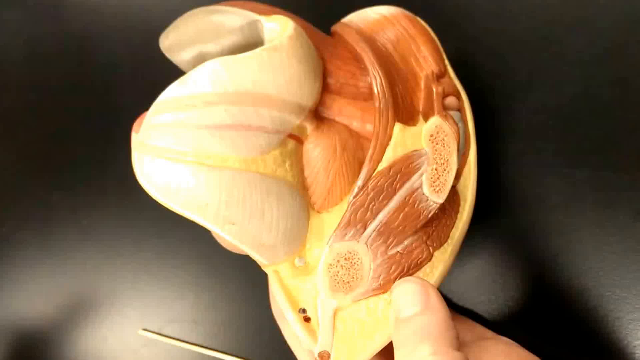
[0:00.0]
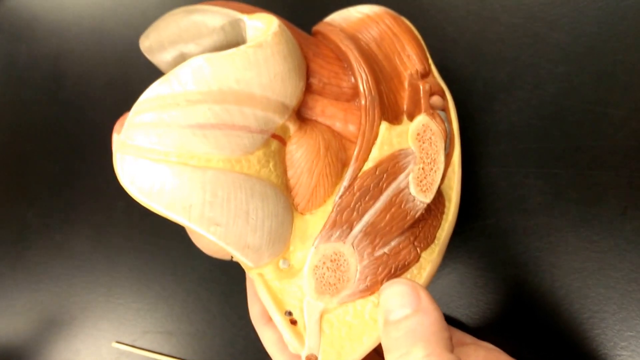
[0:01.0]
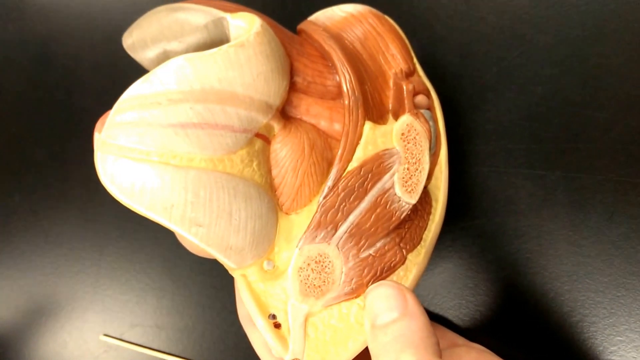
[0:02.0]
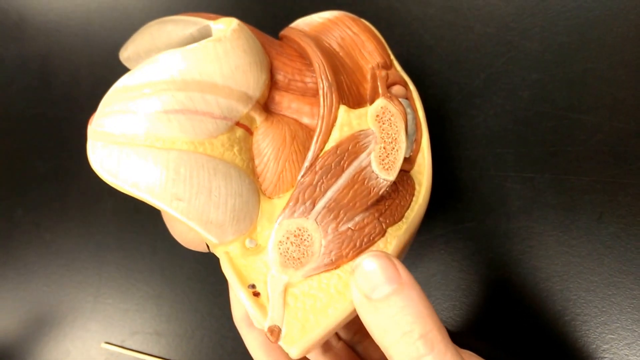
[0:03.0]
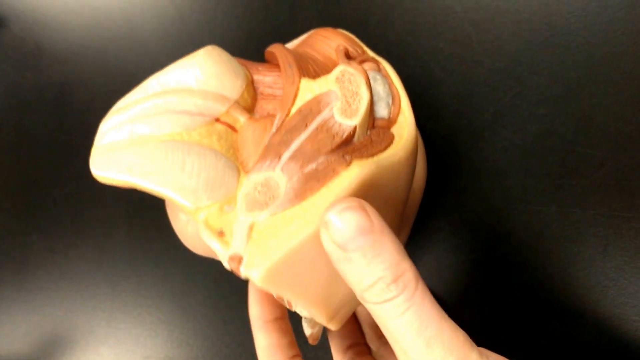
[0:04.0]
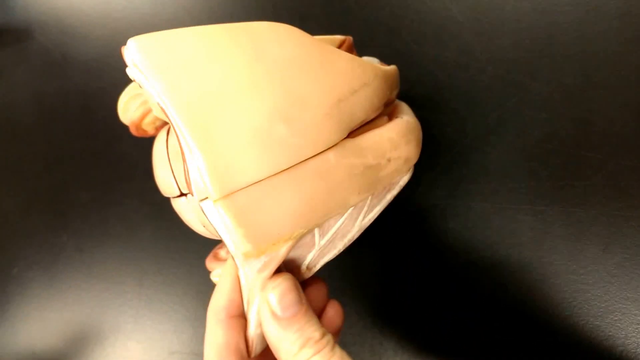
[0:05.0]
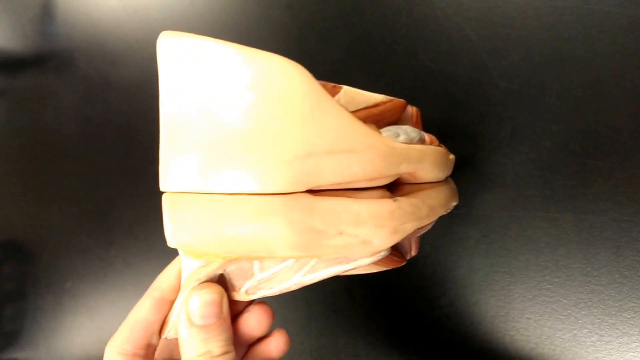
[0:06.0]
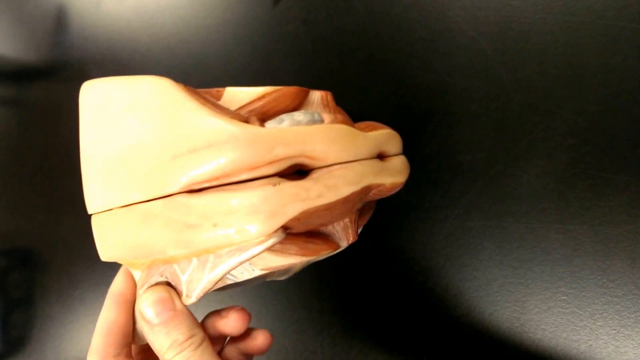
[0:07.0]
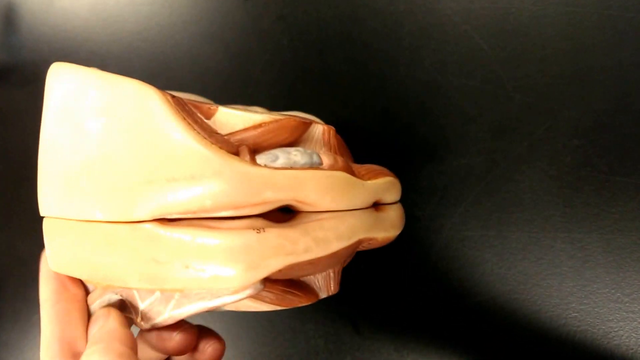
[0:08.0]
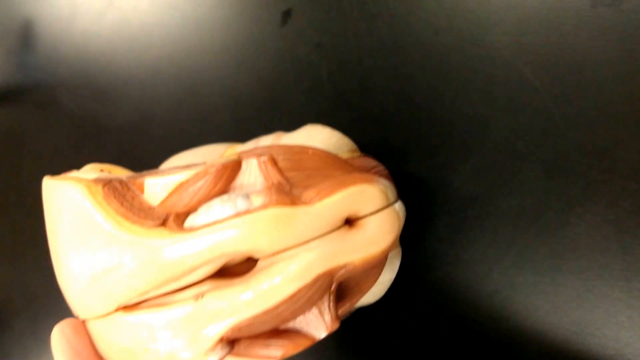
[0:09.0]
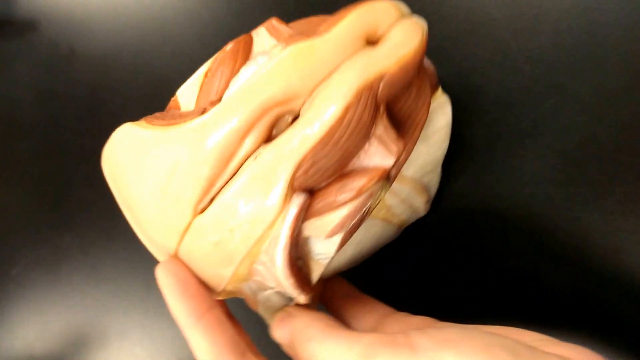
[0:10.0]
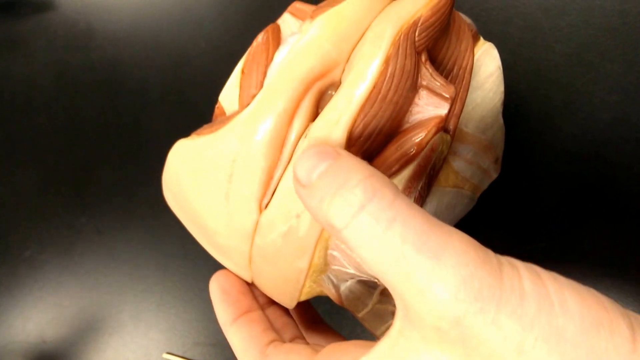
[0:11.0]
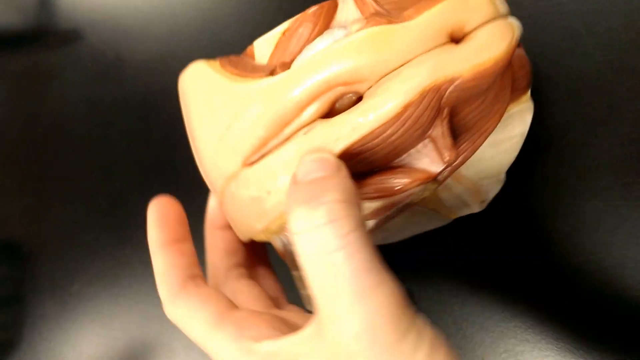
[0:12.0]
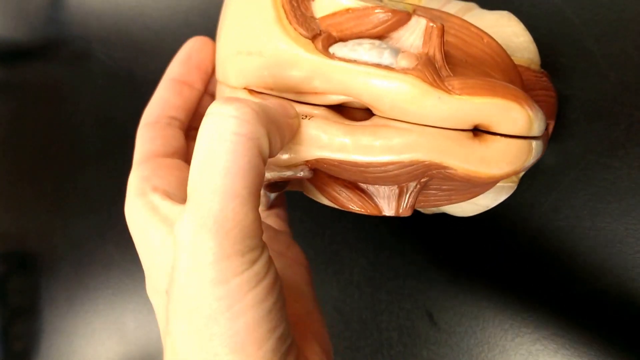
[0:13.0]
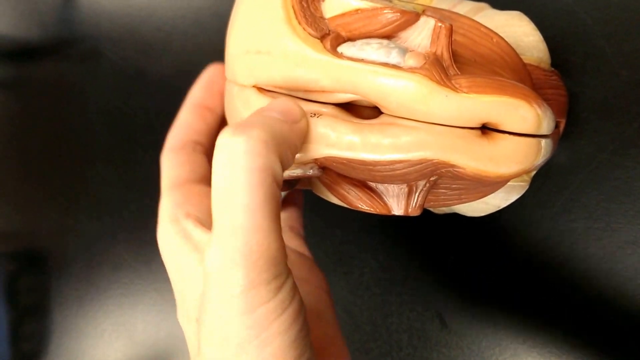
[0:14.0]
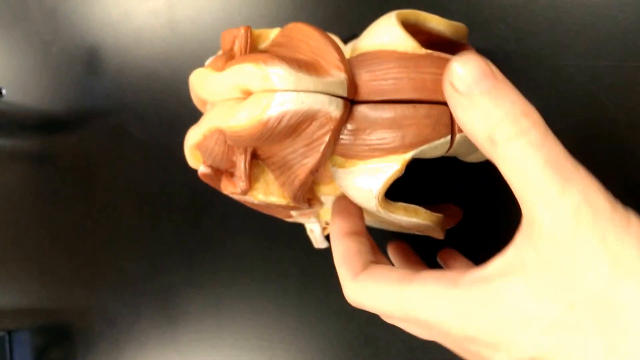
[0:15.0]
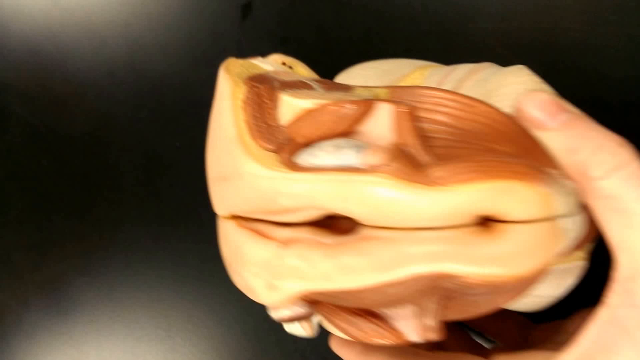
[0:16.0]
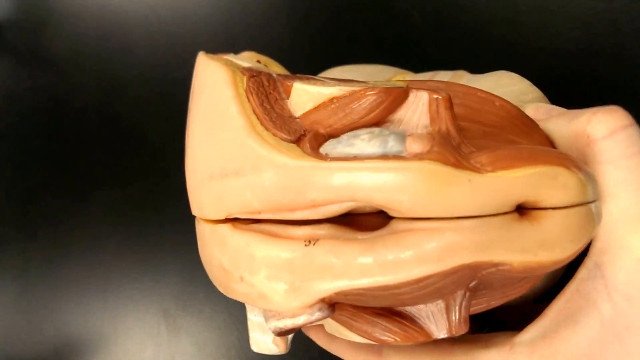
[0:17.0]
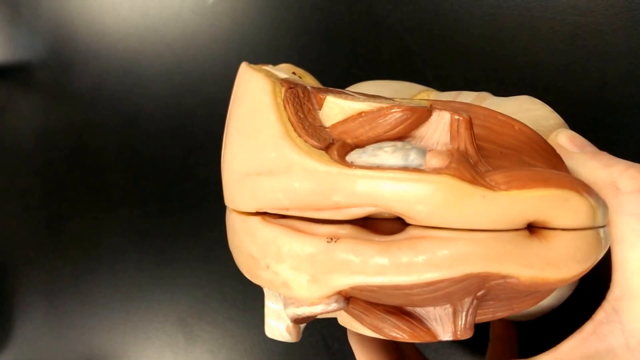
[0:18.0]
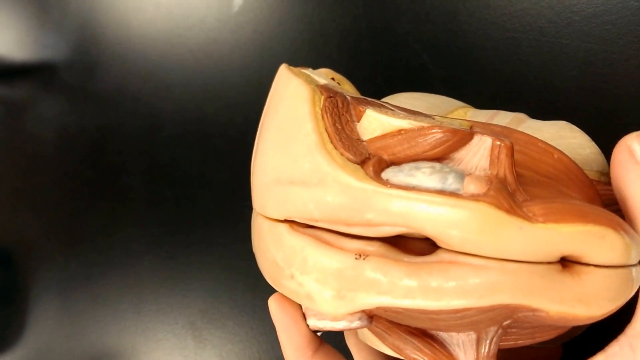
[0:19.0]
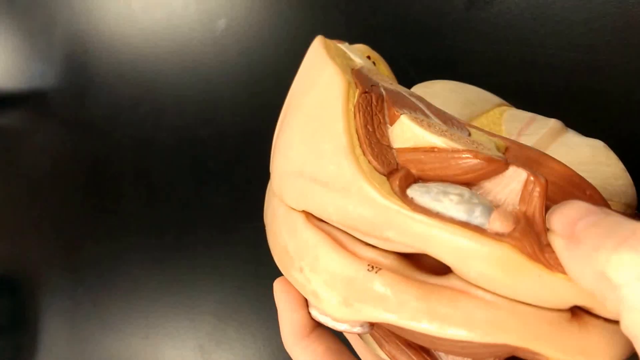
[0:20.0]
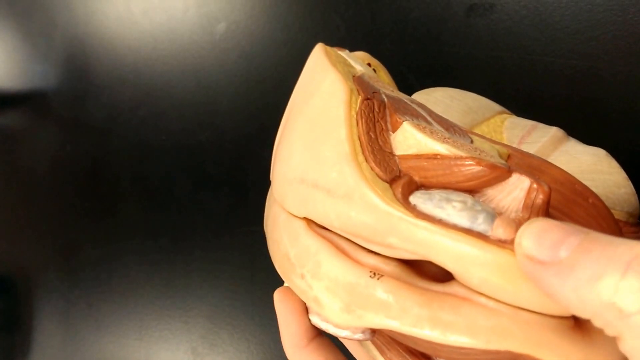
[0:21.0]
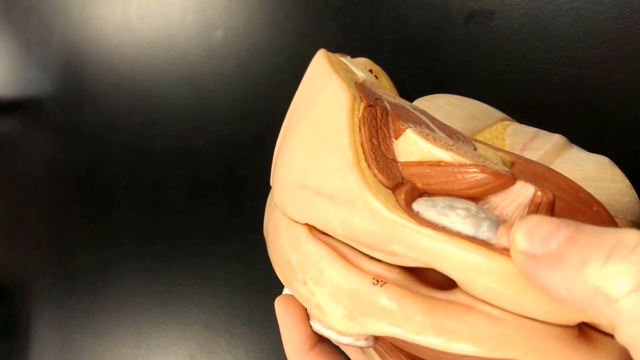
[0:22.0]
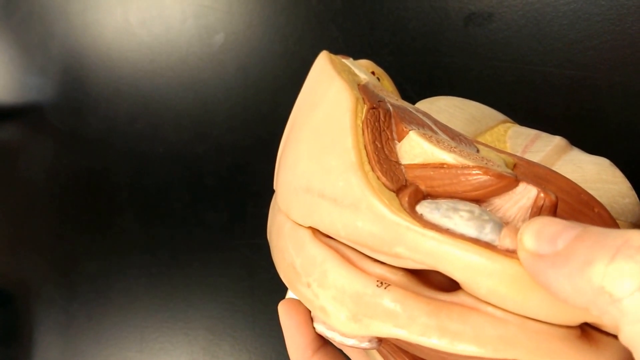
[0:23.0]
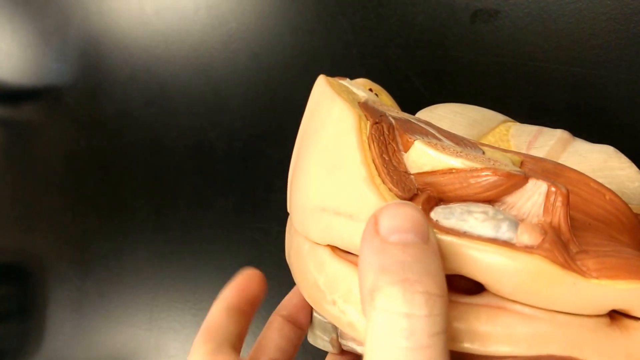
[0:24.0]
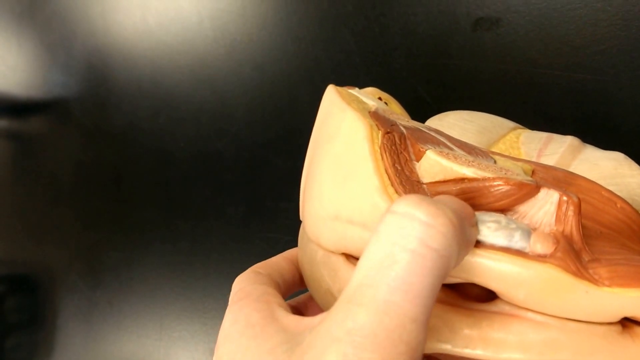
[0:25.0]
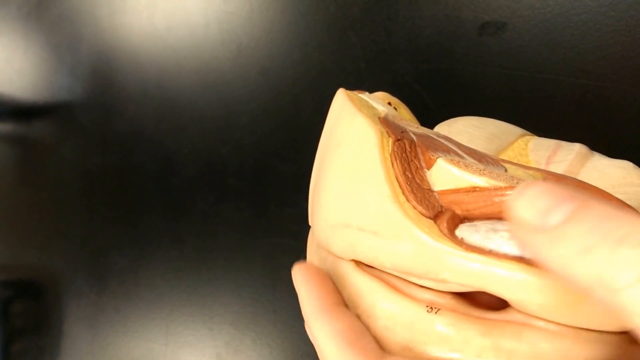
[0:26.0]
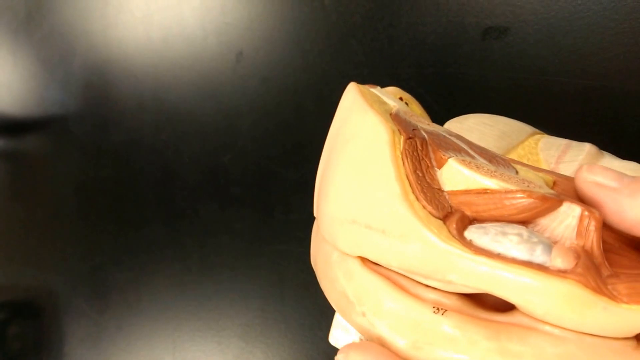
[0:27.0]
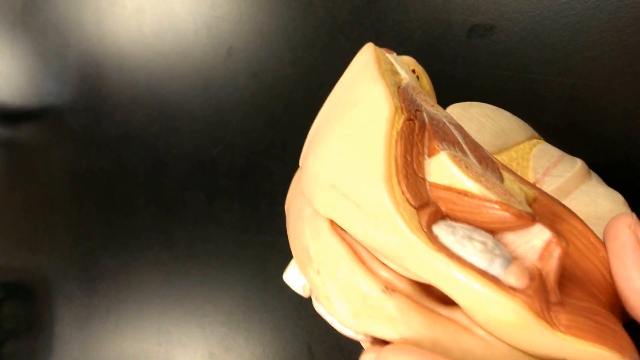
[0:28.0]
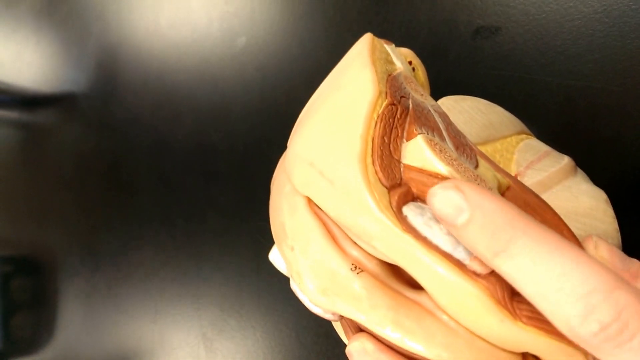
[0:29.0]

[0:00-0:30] A plastic model of a mass of muscles and what seems to be skin is held over a black surface in someone's left hand, with the thumb visible holding one side and the fingers holding the other. The person slowly rotates it to the side, showing a sort of flesh skin design on the side opposite the muscles. It appears to be a model of a human vagina with anus. The person uses their thumb to point out a part of the model and then an intersection of the model. They press their thumb on a white mass under the skin again and again, then slowly rotate the model and point toward muscles behind that white mass.